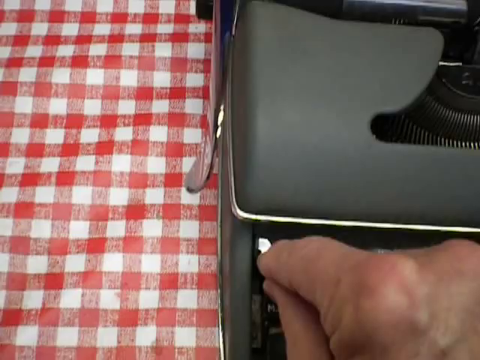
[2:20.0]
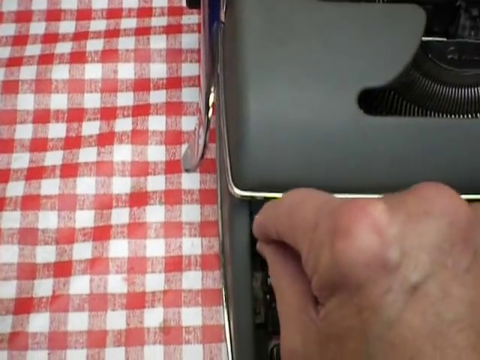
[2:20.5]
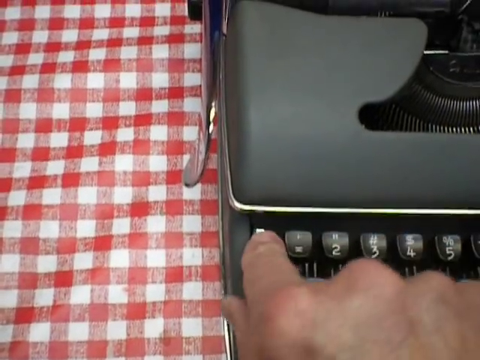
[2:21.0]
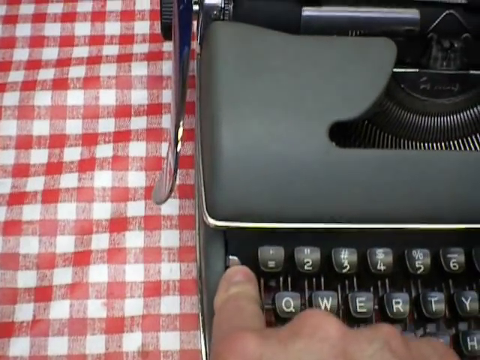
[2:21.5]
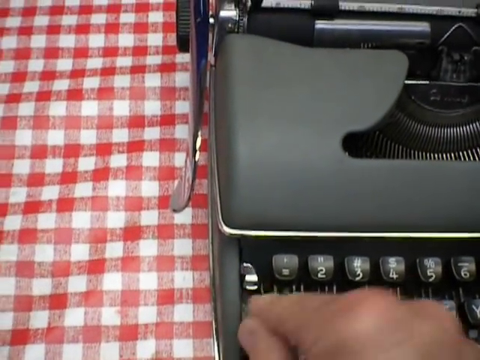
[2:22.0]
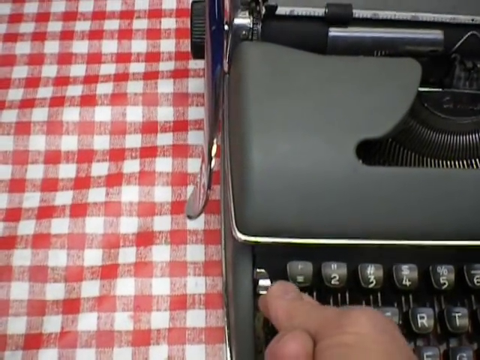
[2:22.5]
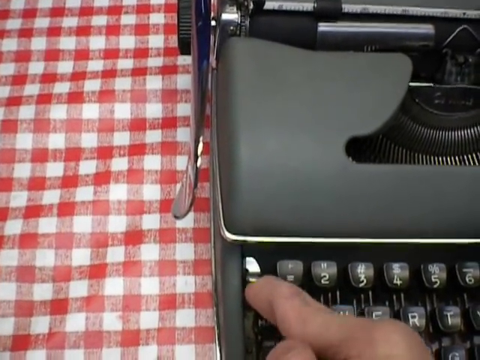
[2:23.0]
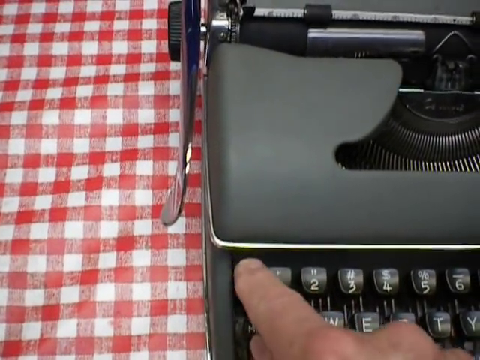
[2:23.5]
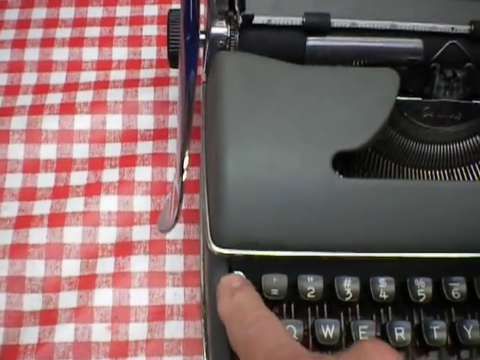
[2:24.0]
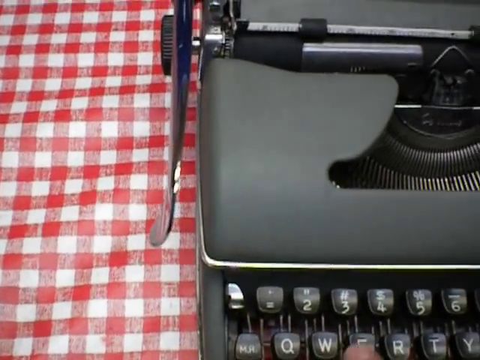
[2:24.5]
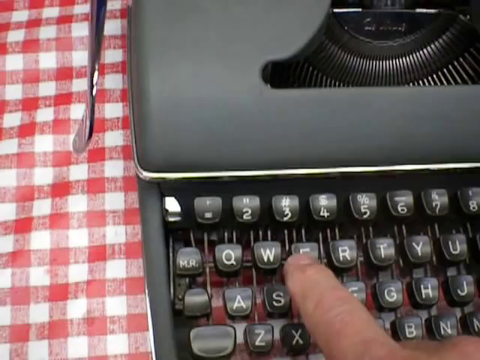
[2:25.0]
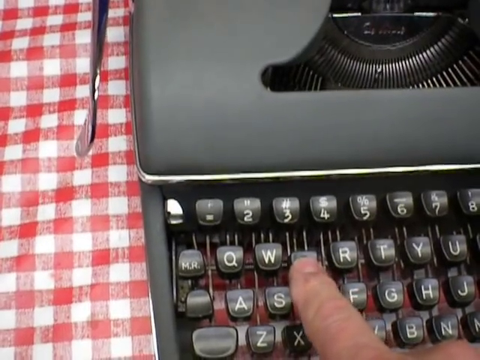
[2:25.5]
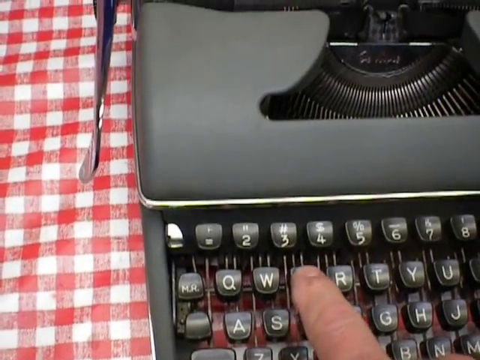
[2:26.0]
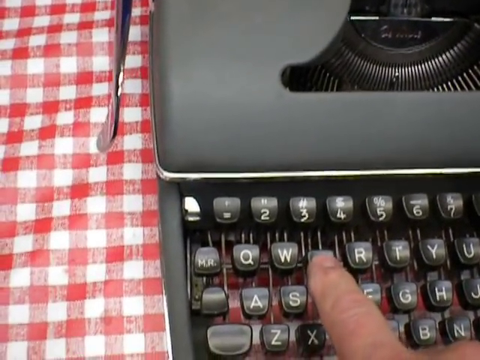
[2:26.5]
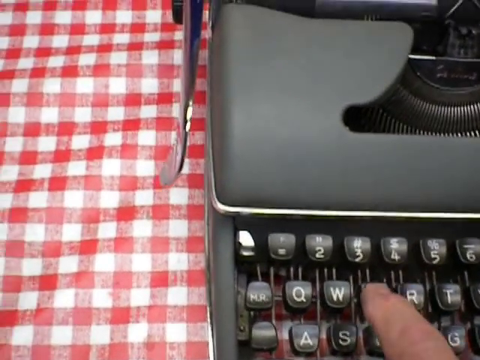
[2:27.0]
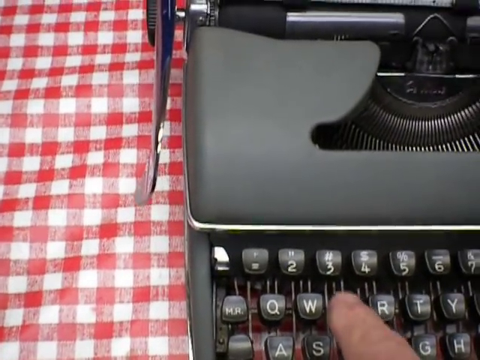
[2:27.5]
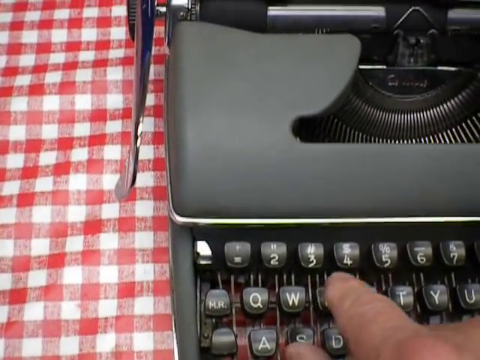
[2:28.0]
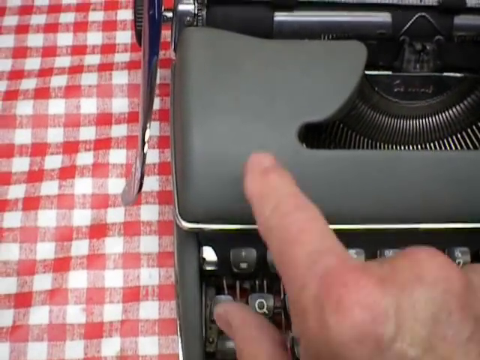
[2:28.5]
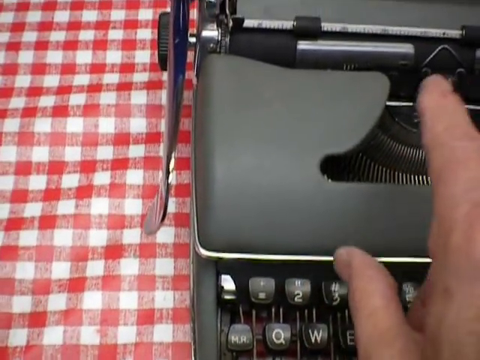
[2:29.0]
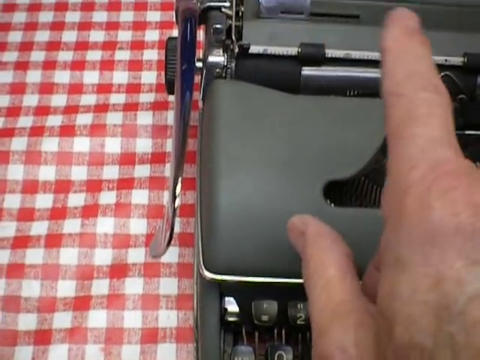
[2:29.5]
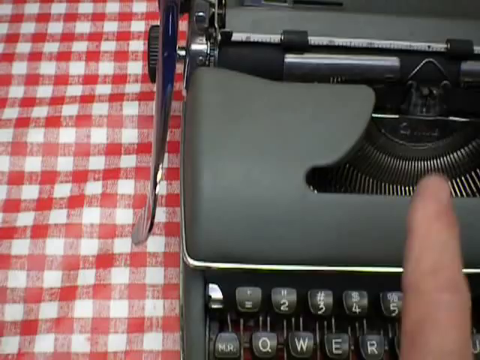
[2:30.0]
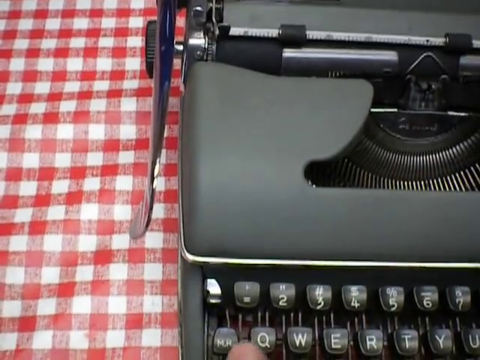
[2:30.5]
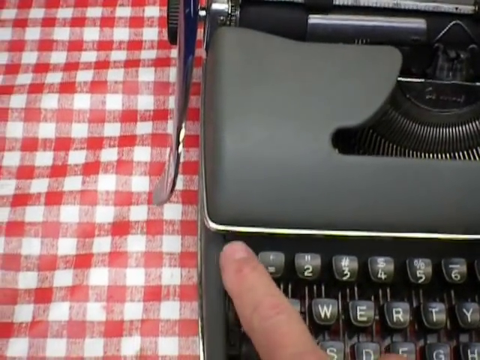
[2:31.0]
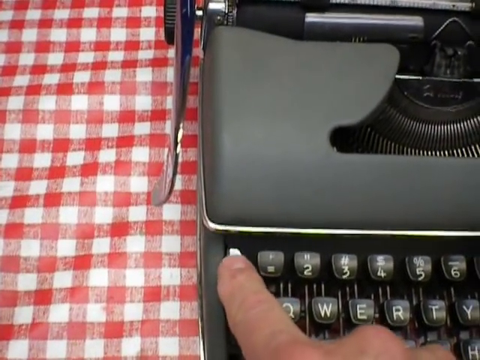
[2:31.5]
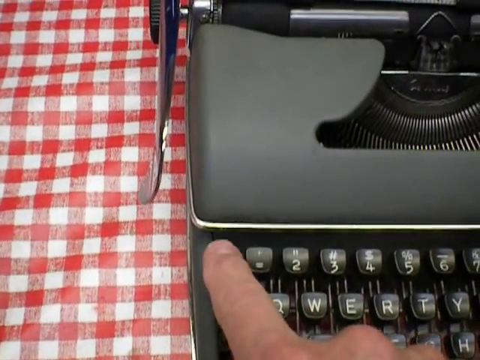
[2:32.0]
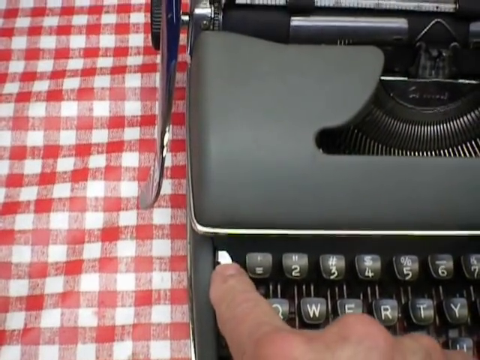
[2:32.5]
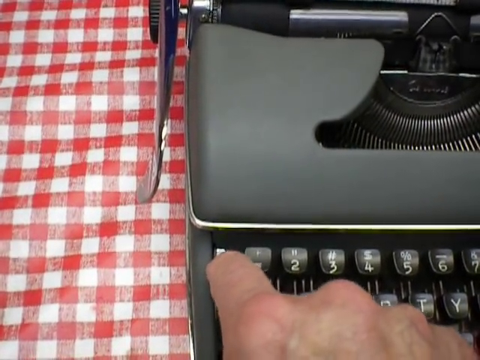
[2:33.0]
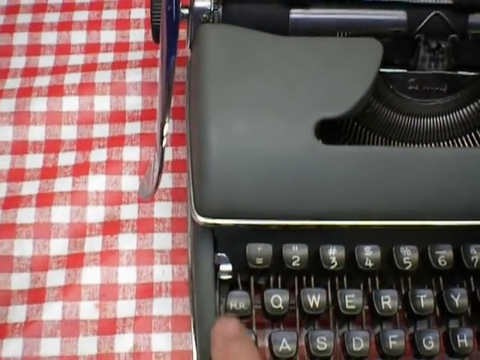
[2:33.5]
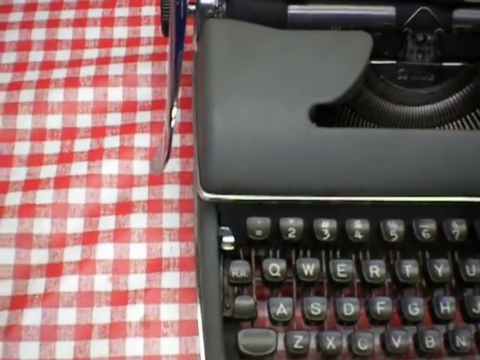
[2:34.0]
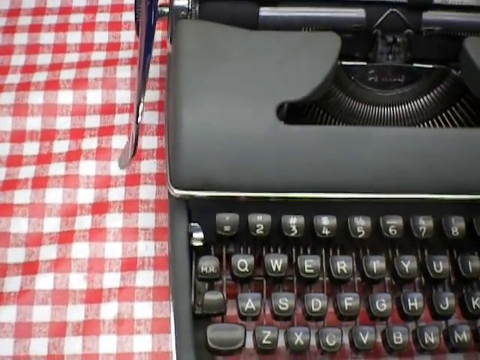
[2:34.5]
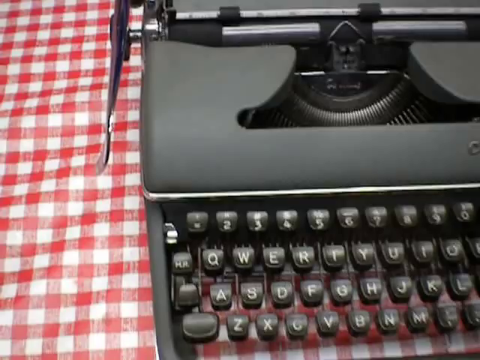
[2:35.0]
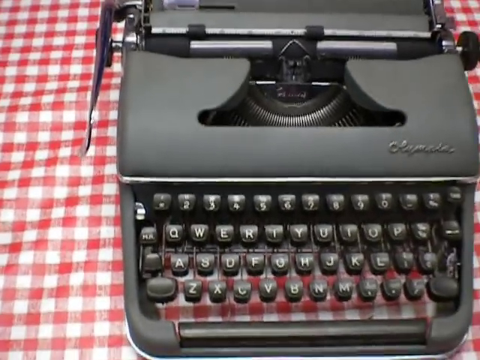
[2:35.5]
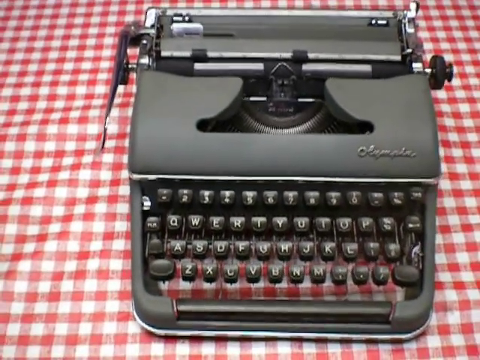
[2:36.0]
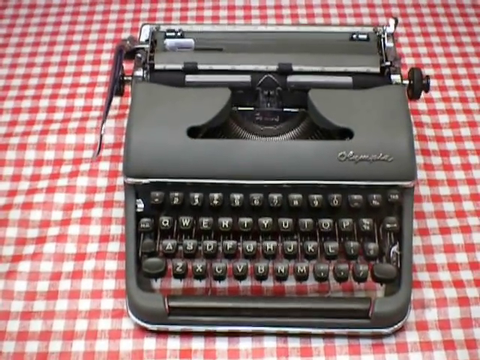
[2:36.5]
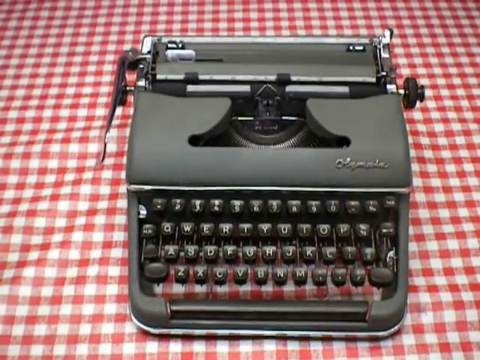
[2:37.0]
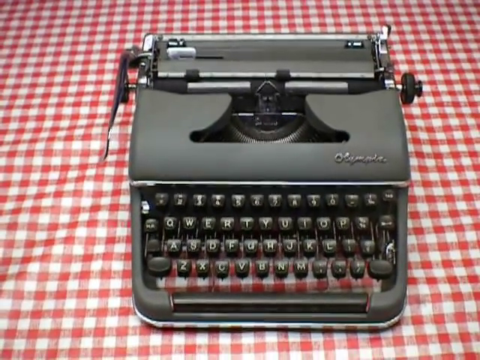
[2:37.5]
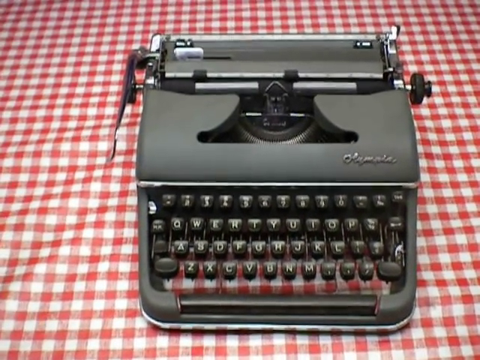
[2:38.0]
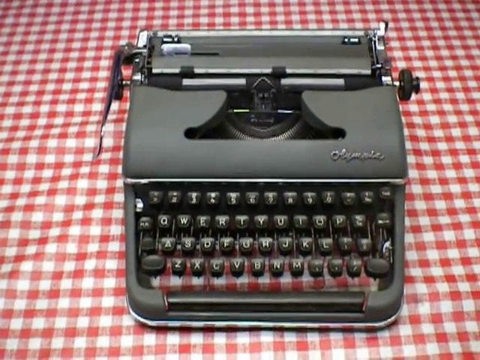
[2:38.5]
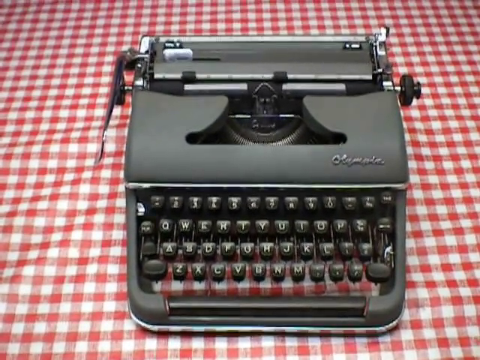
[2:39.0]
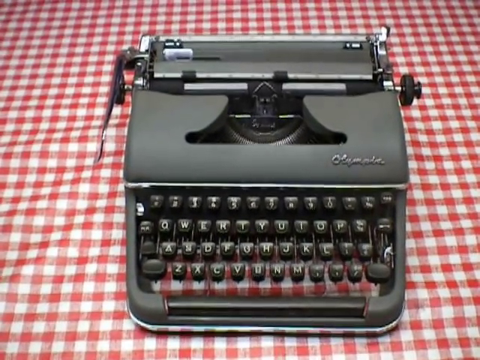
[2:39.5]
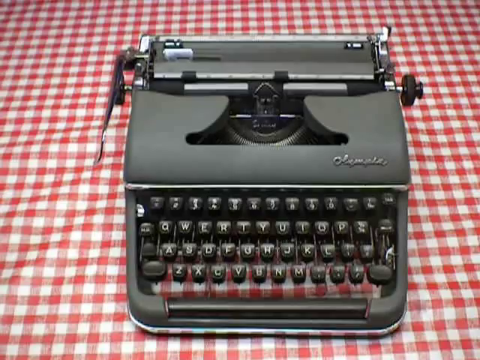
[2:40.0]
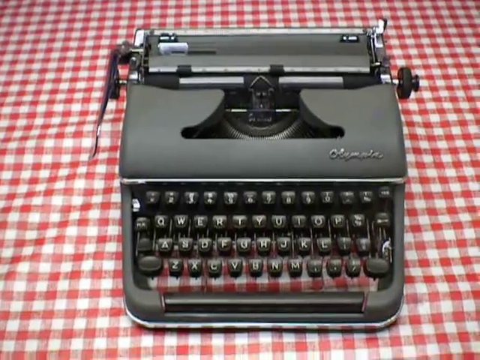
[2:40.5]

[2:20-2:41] A vintage Olympia typewriter sits on a table with a small-patterned red and white checkered tablecloth. The typewriter is slate gray with black keys bearing white numbers and letters. An index finger points to the space bar, touching it on the left-hand side, then slides all the way across to the right-hand side. A hand touches the cylinder and the return bar on the left-hand side of the typewriter, then touches a small silver lever just to the left of the number keys and moves it back and forth. The hand then turns the typewriter, showing the inside of the upper left side, and the finger points to a small metal bar that is moving back and forth.